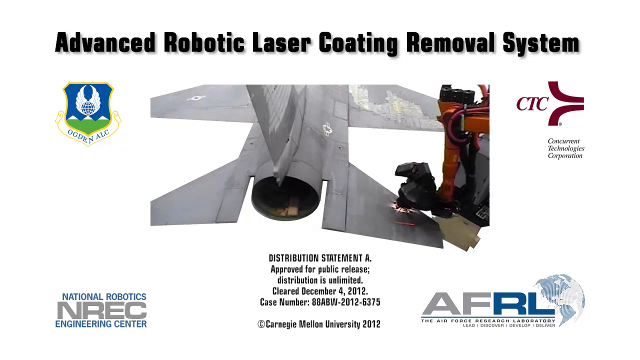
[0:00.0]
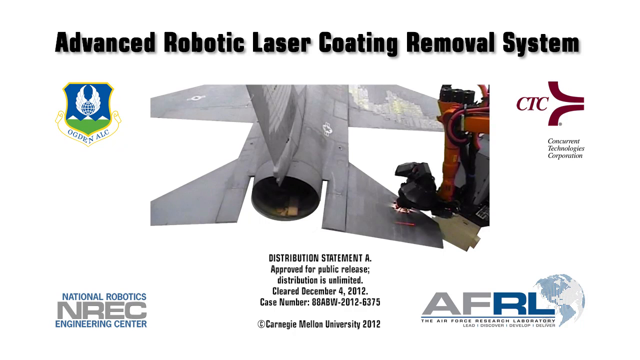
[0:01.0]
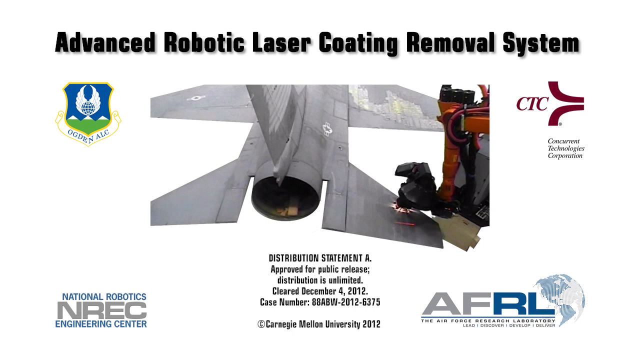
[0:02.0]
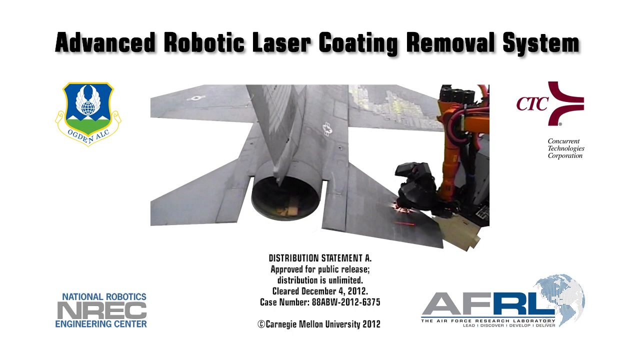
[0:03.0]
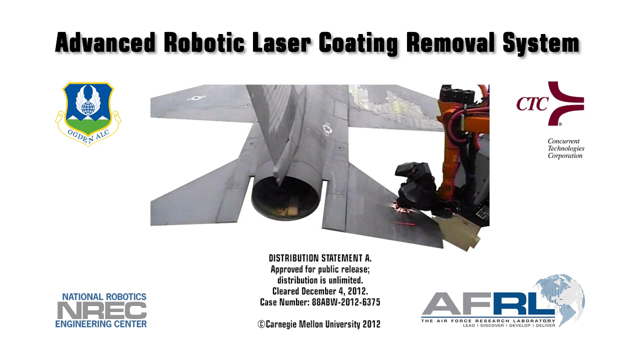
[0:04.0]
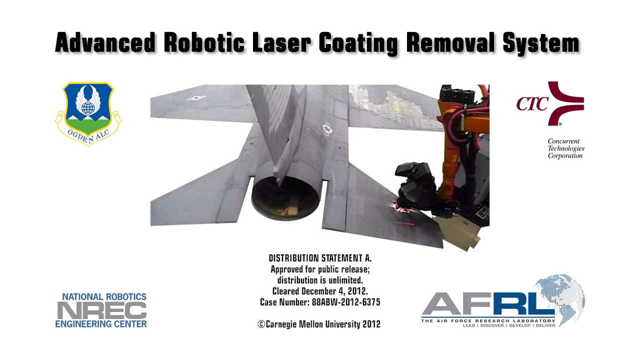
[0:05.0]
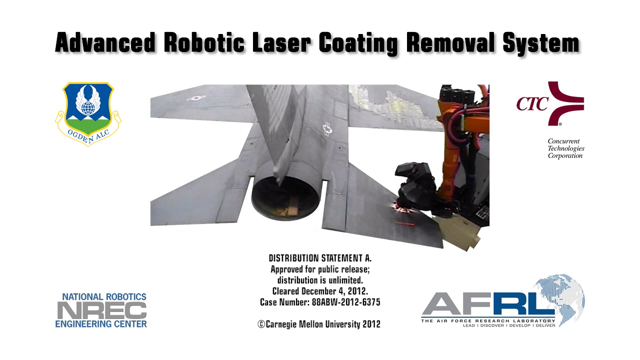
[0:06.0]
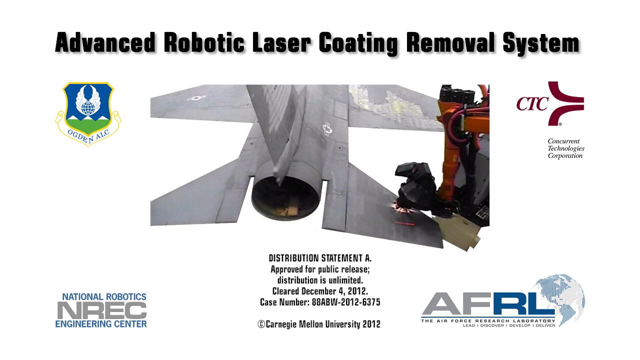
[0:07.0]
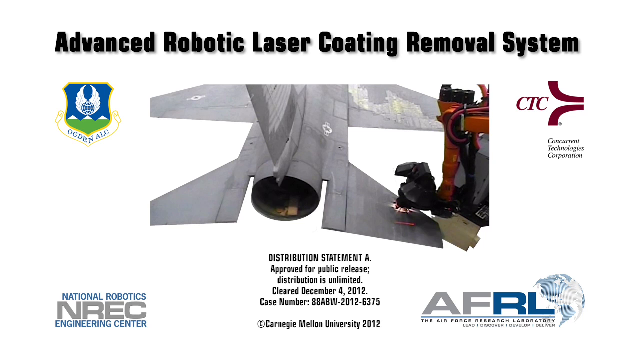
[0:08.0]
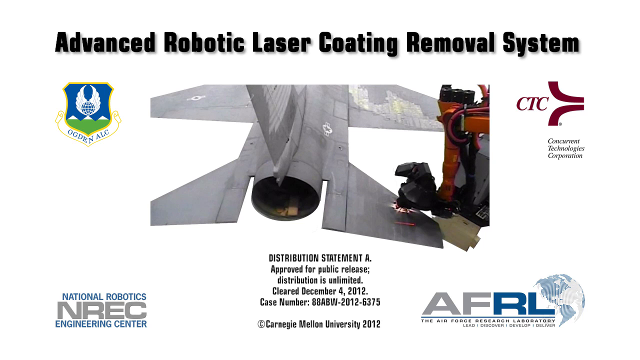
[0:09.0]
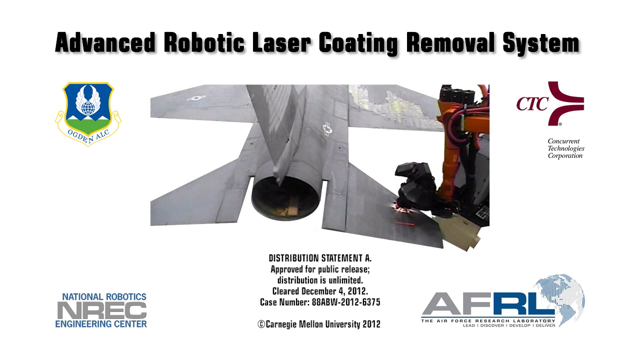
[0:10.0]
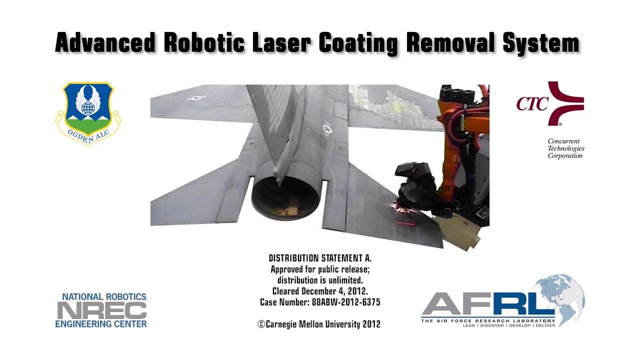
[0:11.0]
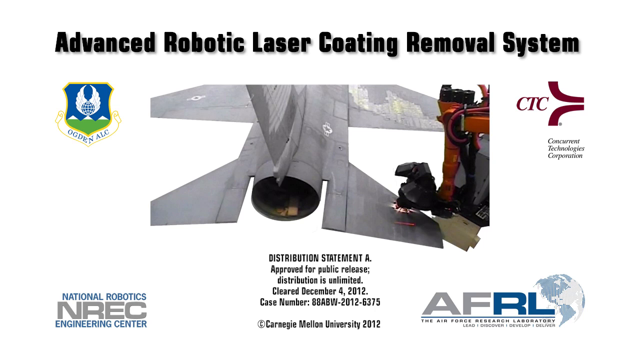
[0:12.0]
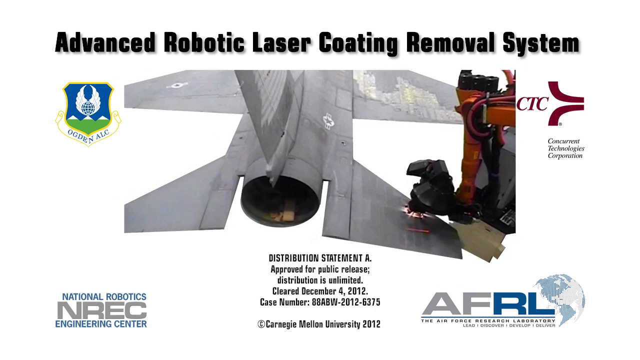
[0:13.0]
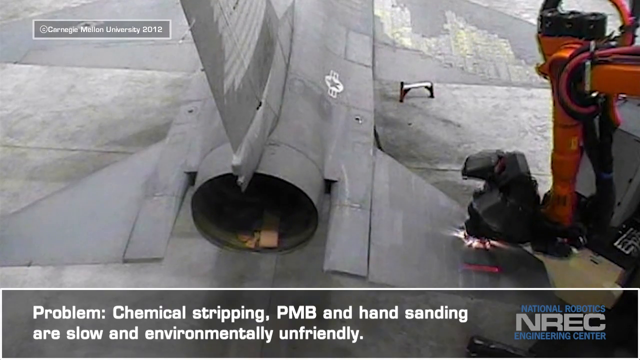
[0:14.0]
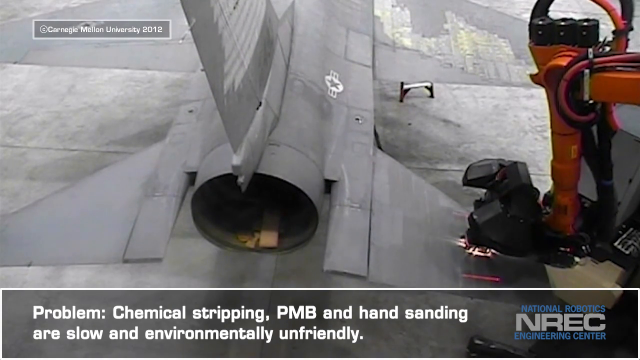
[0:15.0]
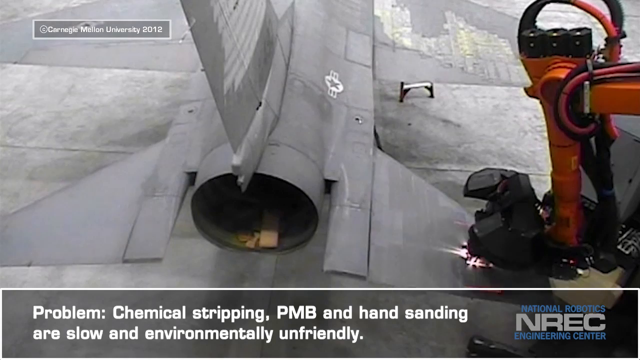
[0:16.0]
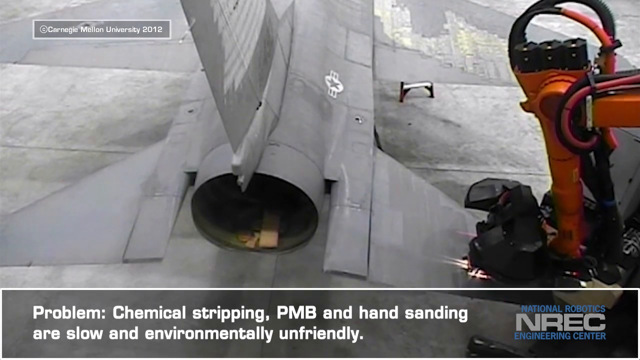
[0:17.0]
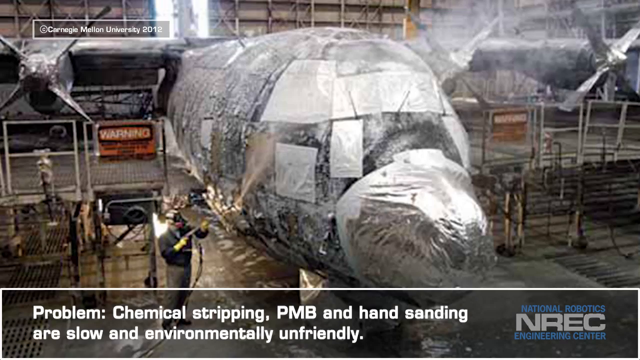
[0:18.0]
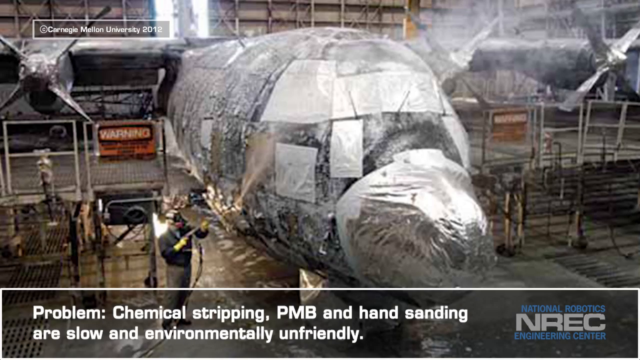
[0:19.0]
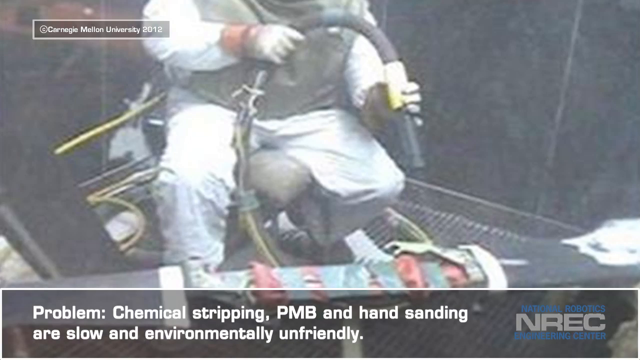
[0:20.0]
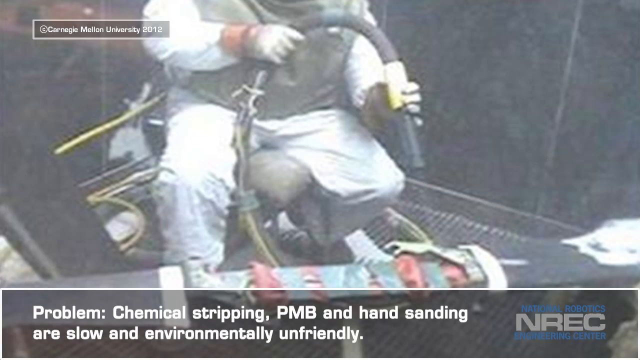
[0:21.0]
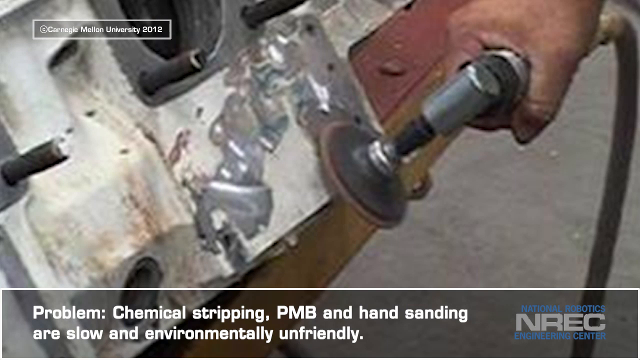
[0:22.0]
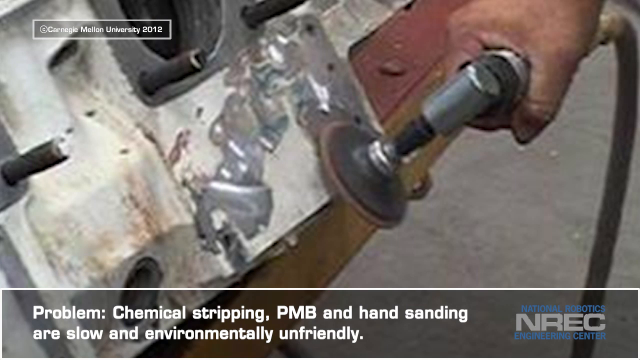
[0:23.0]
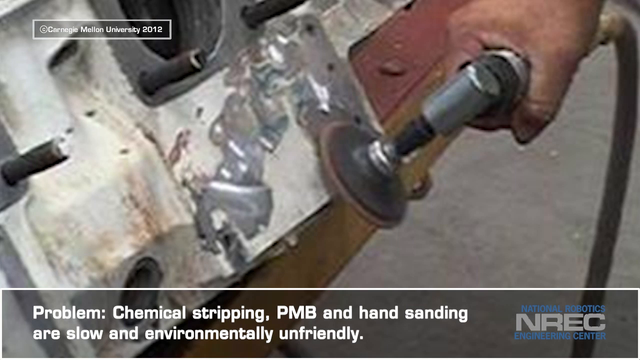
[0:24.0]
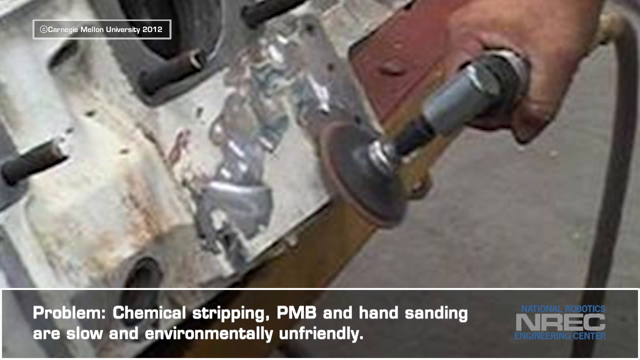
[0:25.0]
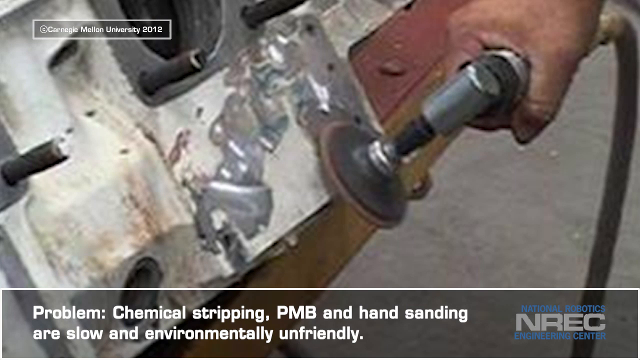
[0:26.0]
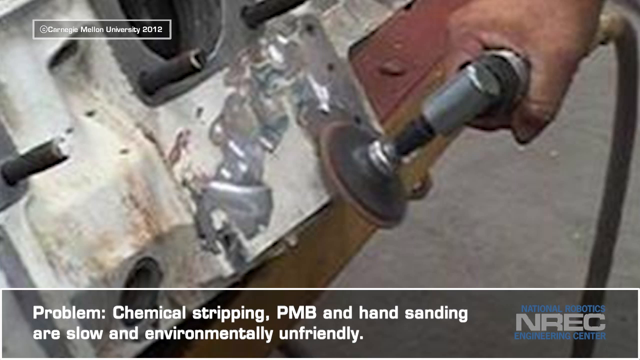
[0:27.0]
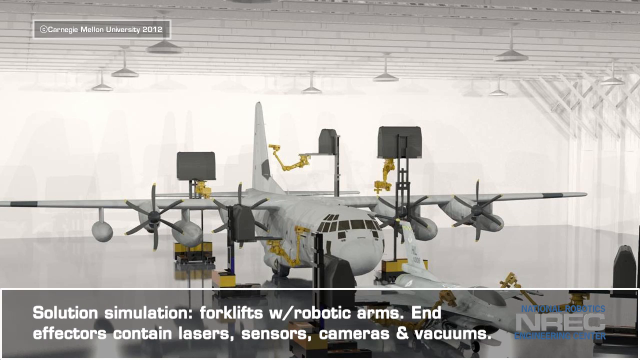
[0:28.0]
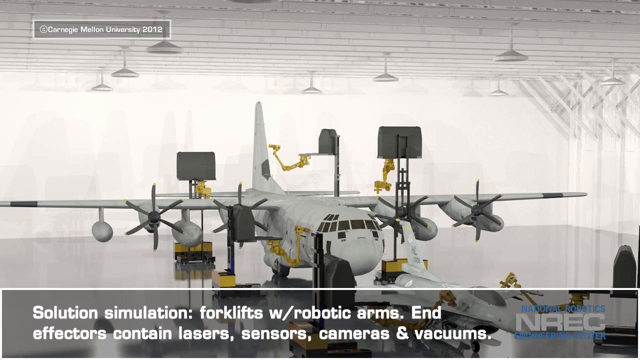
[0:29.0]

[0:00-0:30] An image appears to show some sort of machine. Dark black bold lettering on the image reads "Advanced robot laser coating system removal." The image in the middle is surrounded by four different logos in gray, gray and blue, and red, and in the top left corner there is a blue and green seal. Text reads "Distribution statement approved for public release cleared on December 4, 2012." The screen continues with a solid white background and what appears to be a robotic type of device, the laser coating removal equipment itself. The view zooms in, showing the process and the laser in use with an individual using it, and someone using a hand sander, showing that they are chemically stripping it.